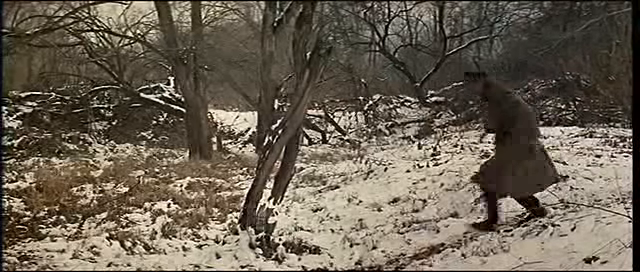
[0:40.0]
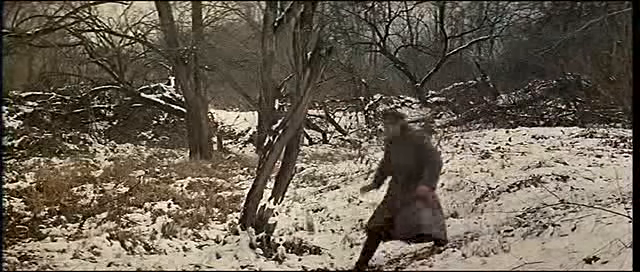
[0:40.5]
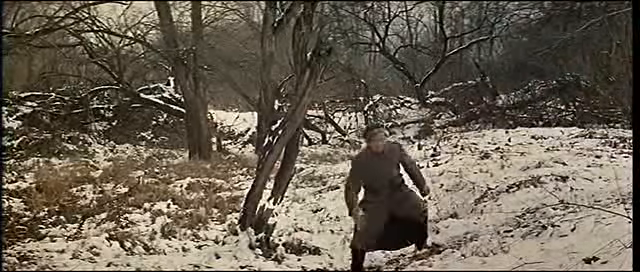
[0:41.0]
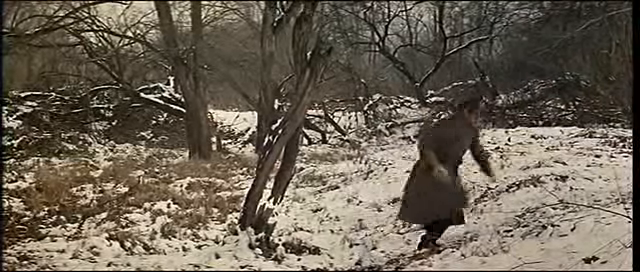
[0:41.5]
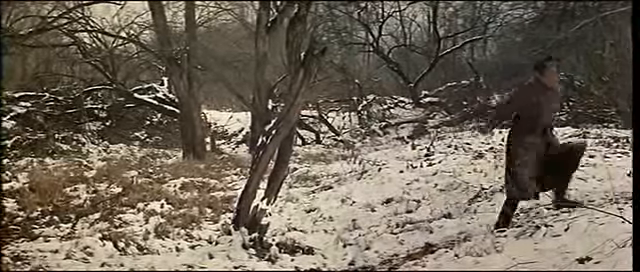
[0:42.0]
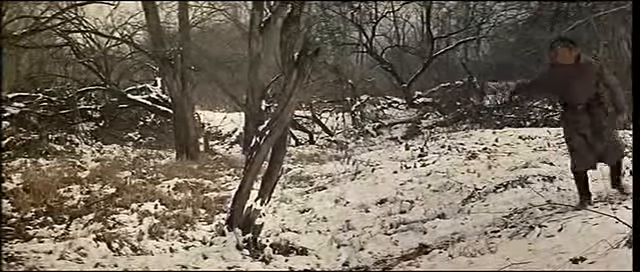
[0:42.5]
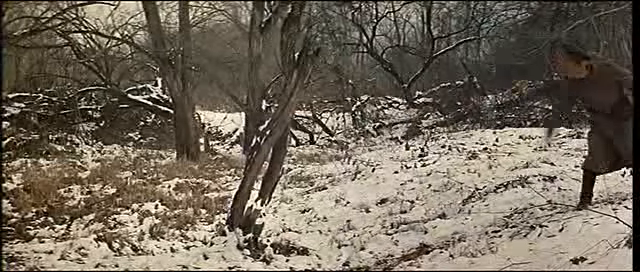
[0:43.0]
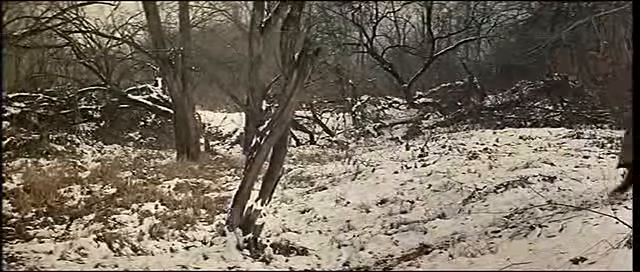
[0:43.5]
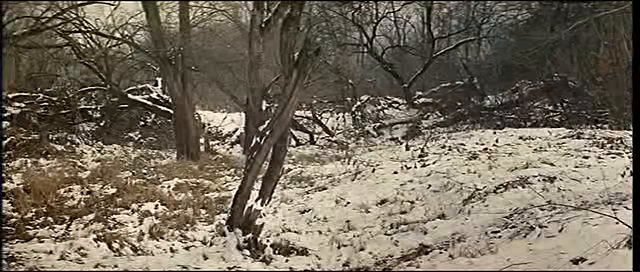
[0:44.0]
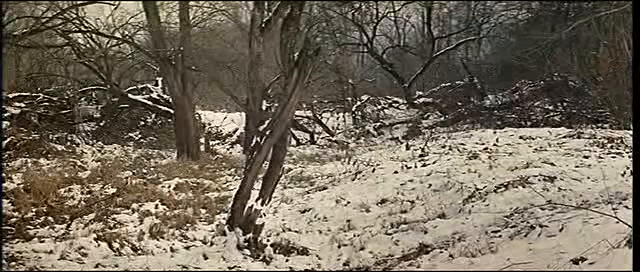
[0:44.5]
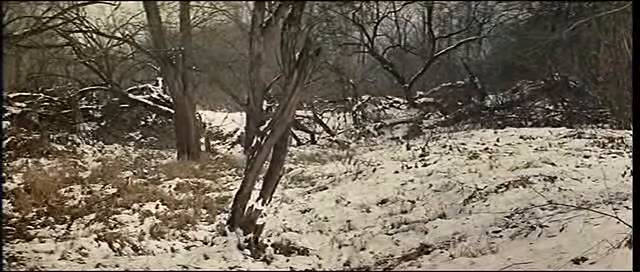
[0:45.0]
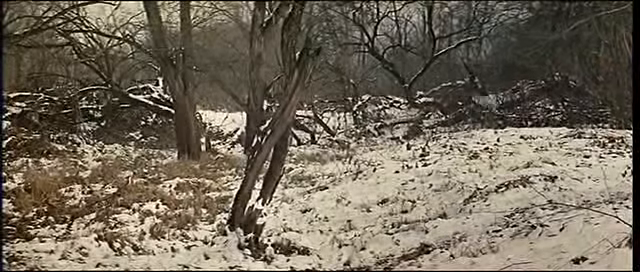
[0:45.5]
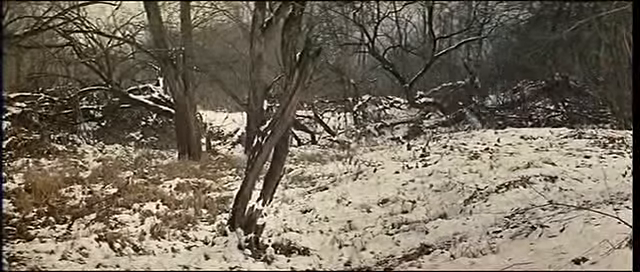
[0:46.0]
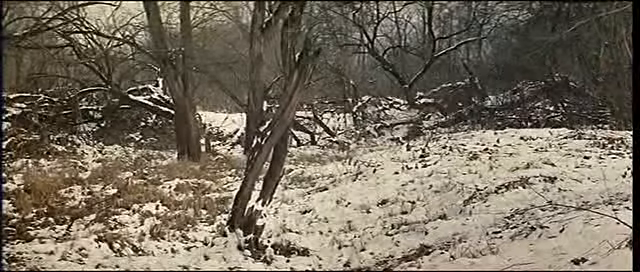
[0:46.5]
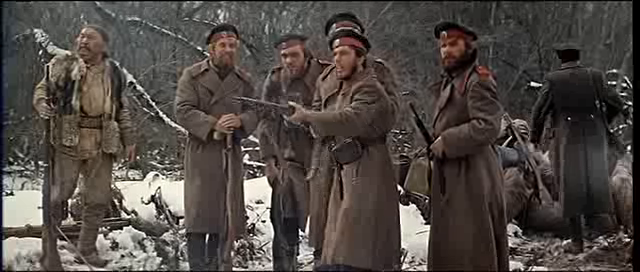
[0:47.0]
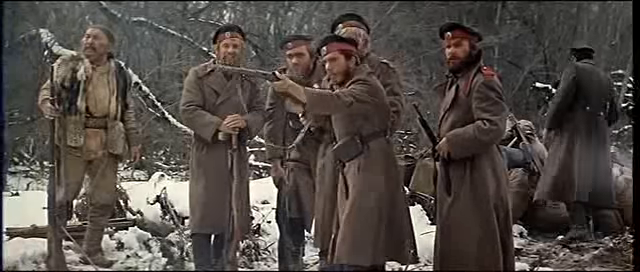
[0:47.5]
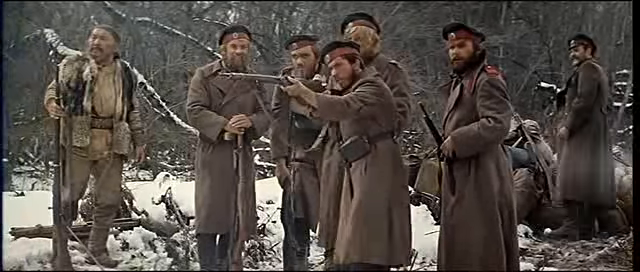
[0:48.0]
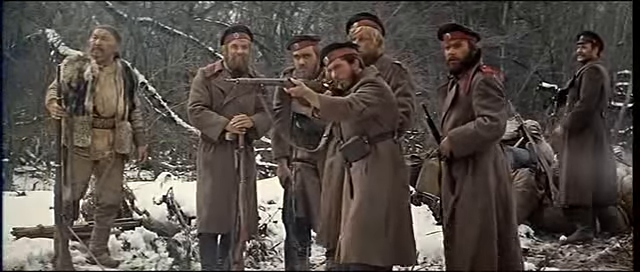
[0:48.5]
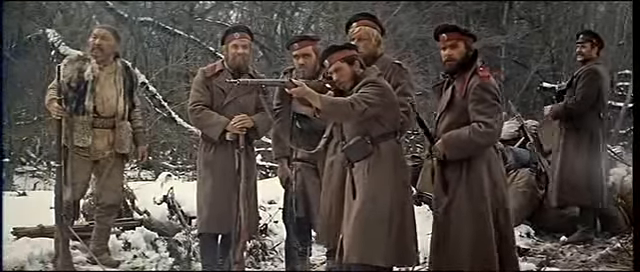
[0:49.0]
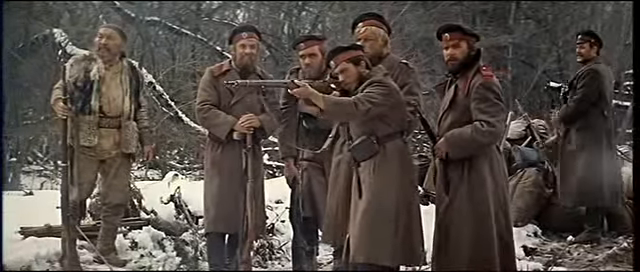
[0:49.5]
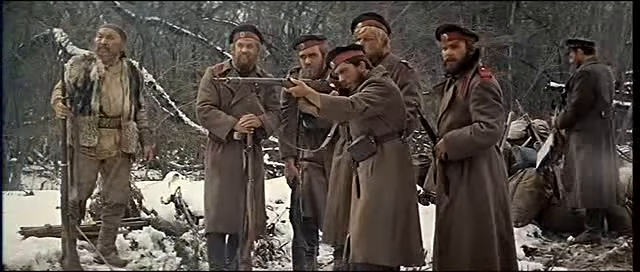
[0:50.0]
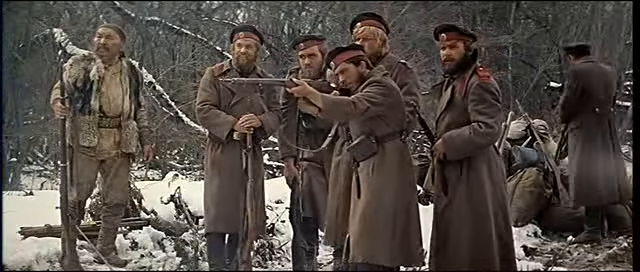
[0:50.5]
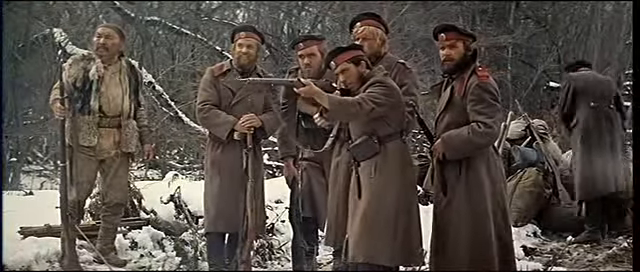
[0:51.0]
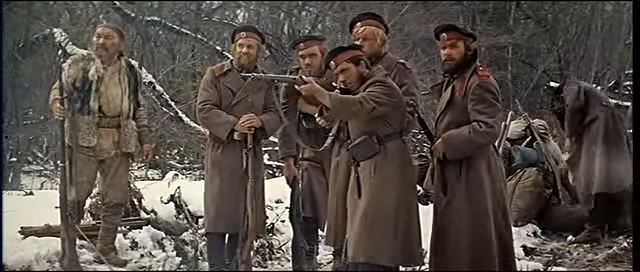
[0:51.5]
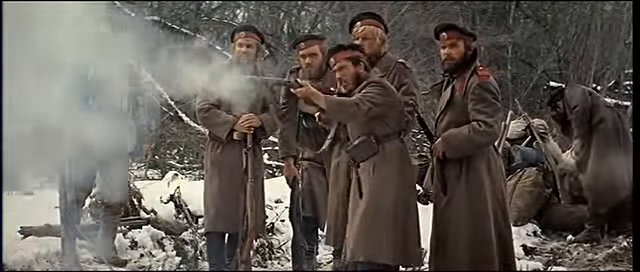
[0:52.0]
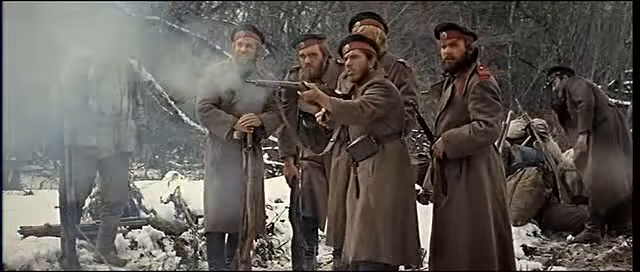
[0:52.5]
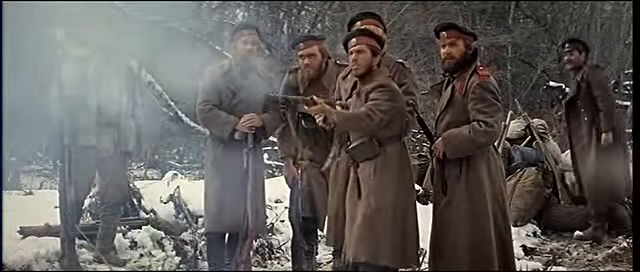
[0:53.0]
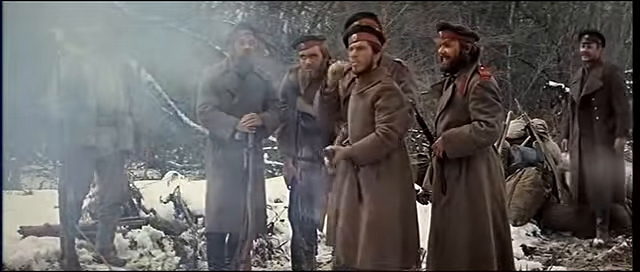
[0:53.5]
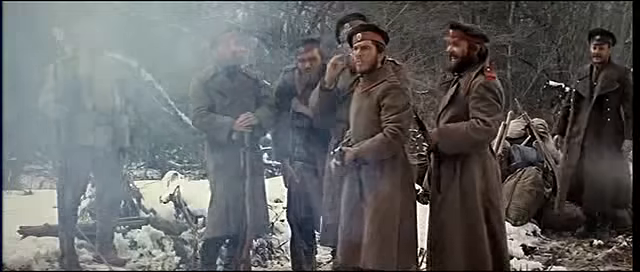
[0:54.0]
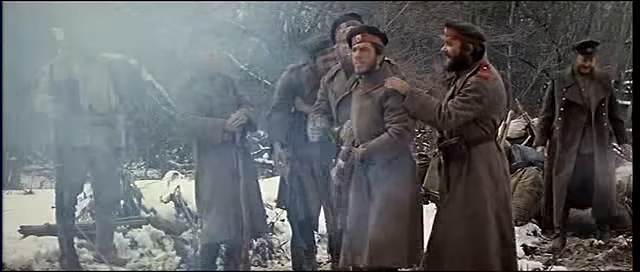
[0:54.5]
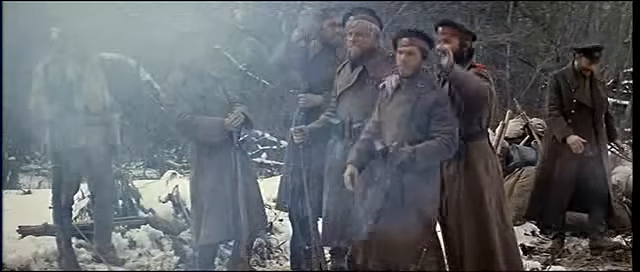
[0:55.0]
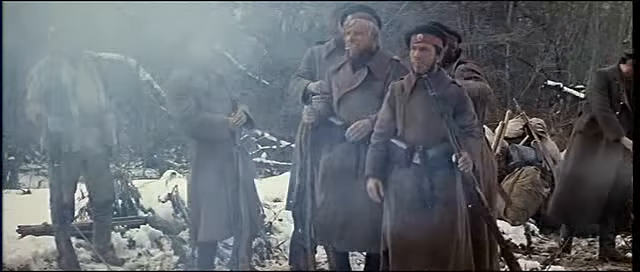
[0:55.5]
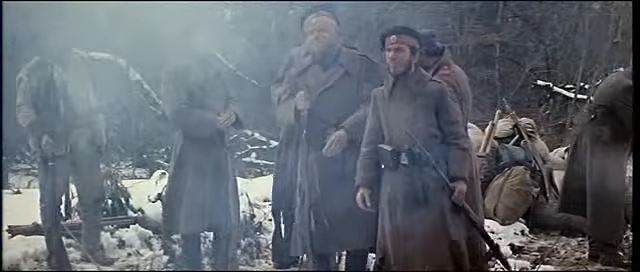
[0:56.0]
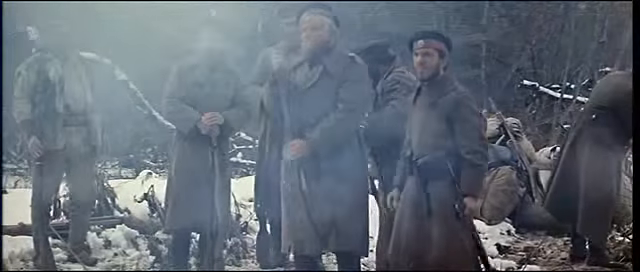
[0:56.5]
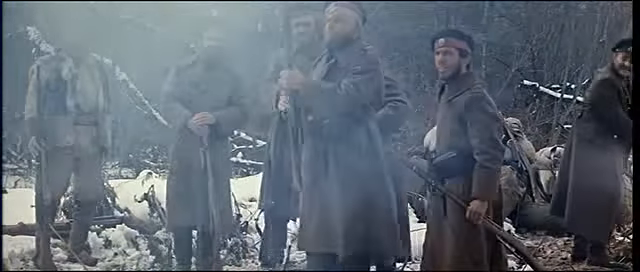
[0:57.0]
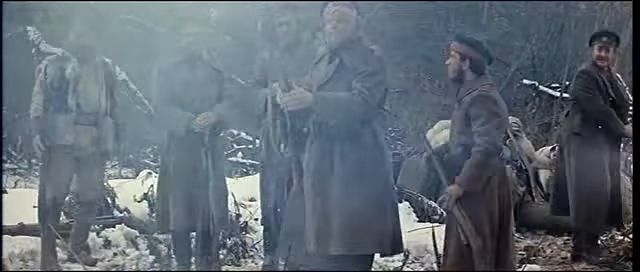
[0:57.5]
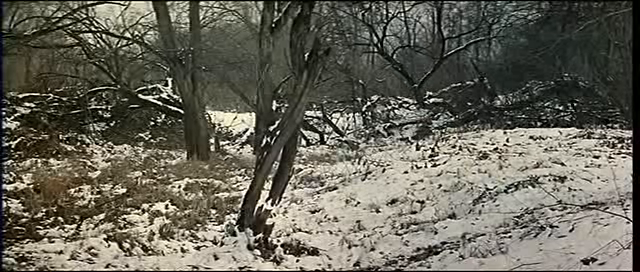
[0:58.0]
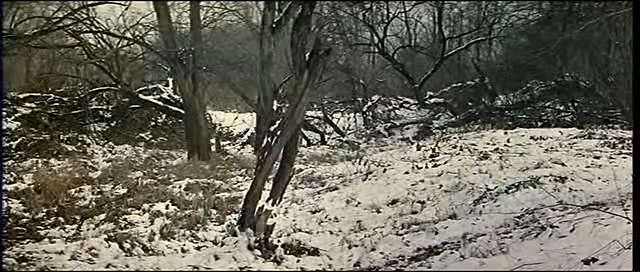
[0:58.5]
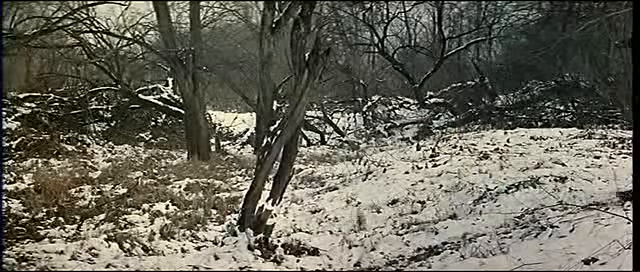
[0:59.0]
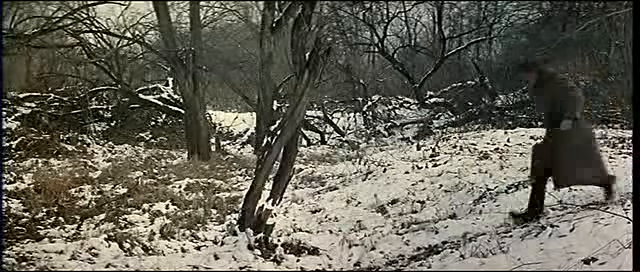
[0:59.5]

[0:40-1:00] On the snowy mountain, a uniformed man runs and grabs what looks like some sort of glass bottle hung by a string on a tree, and swings it until it is fully swinging from left to right. The video cuts back to the Asian man and the five uniformed men, with the man who came in with the Asian man to the right, a little further away in the back. The fourth man of the group appears to shoot at the glass bottle moving on the string attached to the tree. In the back there is what looks like a bunch of bags filled with things and a weapon, and the first uniformed man who accompanied the Asian man is there; he appears to be fixing some things. The video then cuts back to the bottle swinging in the tree as one of the uniformed men goes to reach for it.